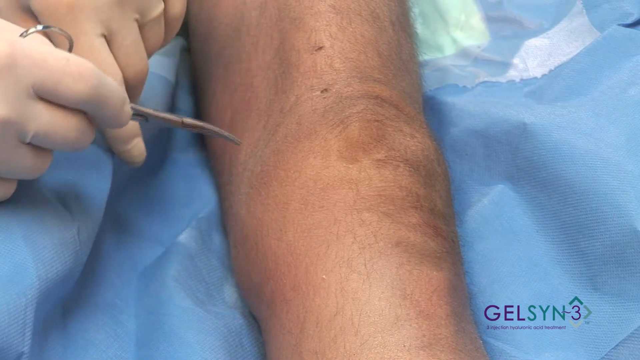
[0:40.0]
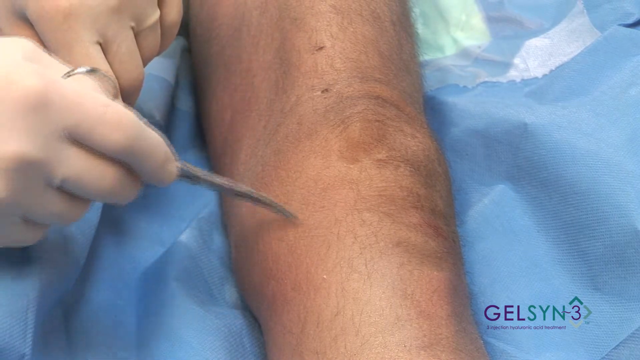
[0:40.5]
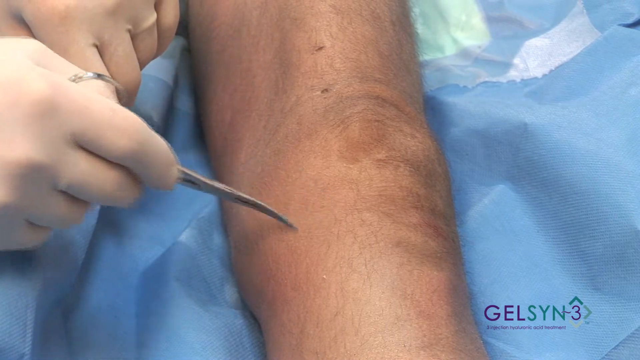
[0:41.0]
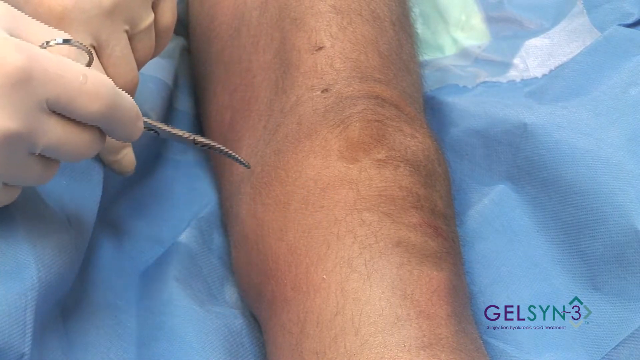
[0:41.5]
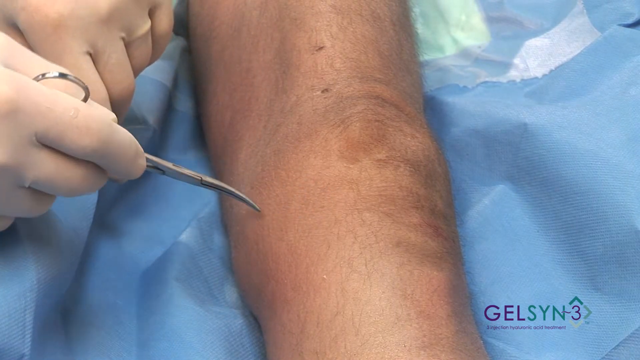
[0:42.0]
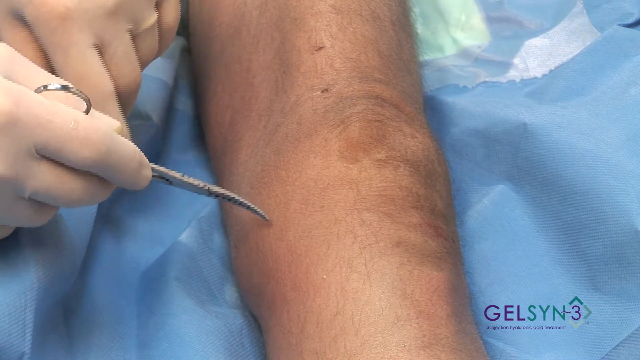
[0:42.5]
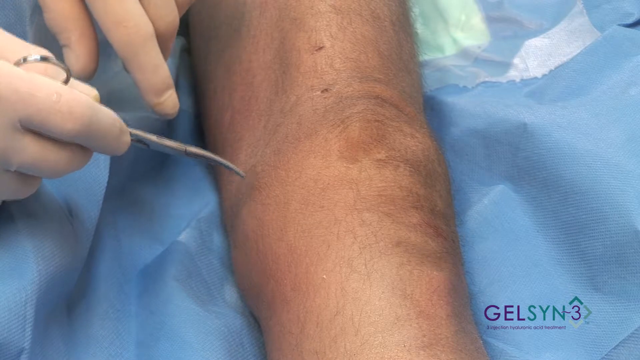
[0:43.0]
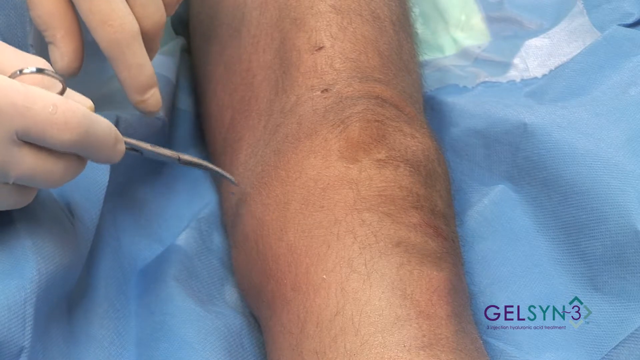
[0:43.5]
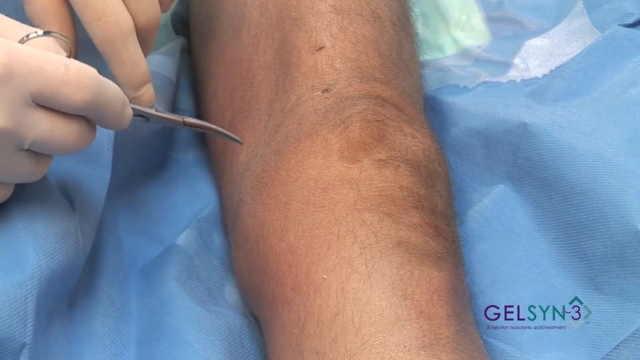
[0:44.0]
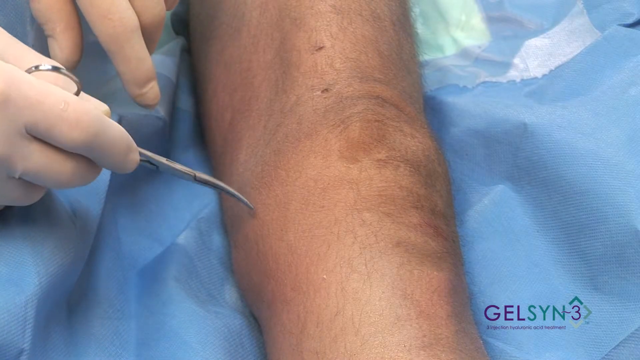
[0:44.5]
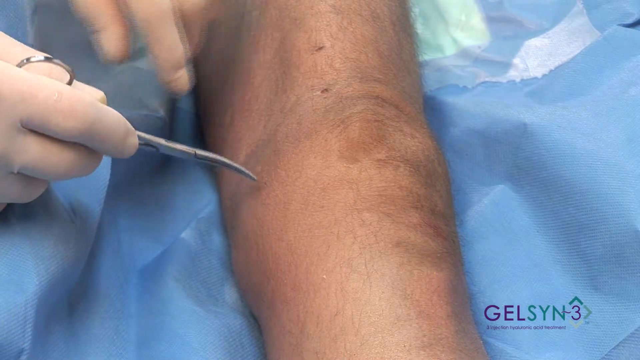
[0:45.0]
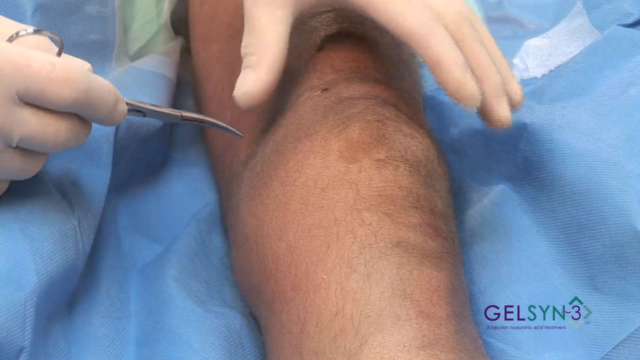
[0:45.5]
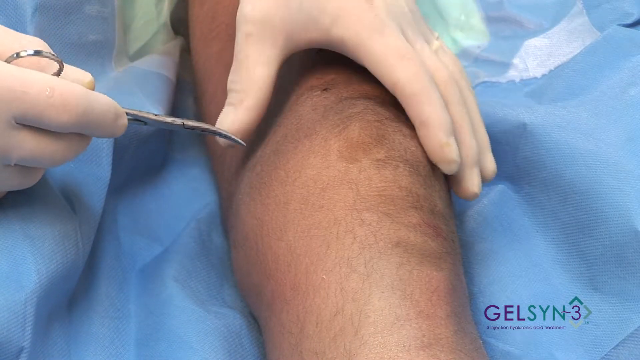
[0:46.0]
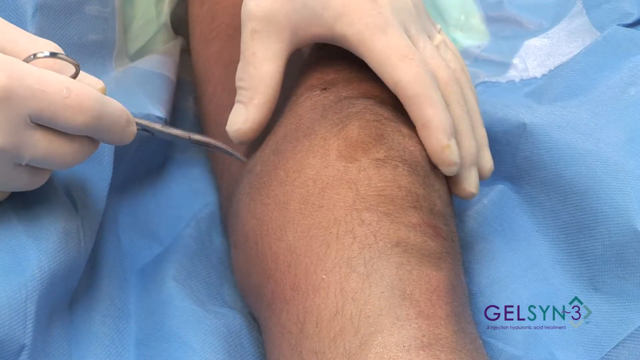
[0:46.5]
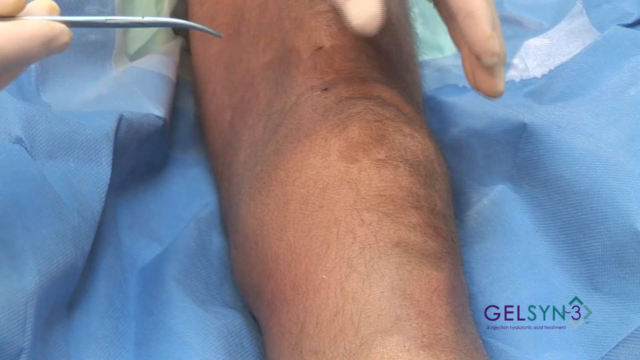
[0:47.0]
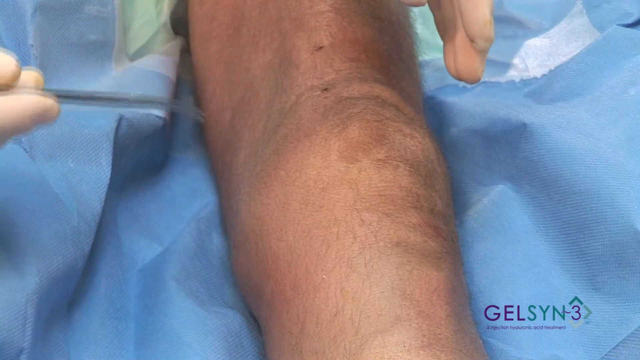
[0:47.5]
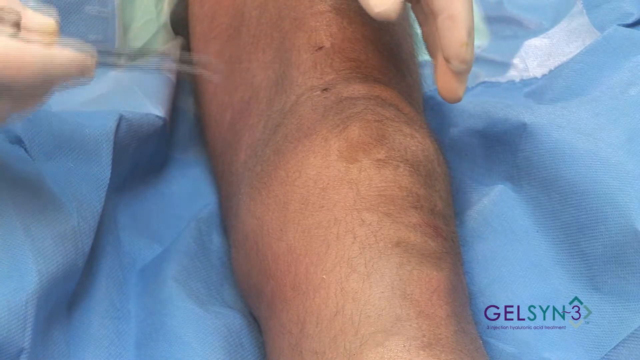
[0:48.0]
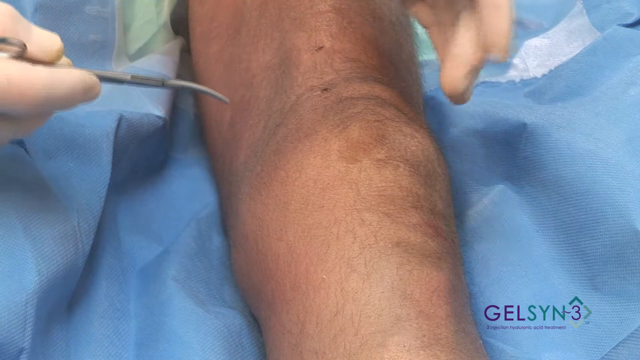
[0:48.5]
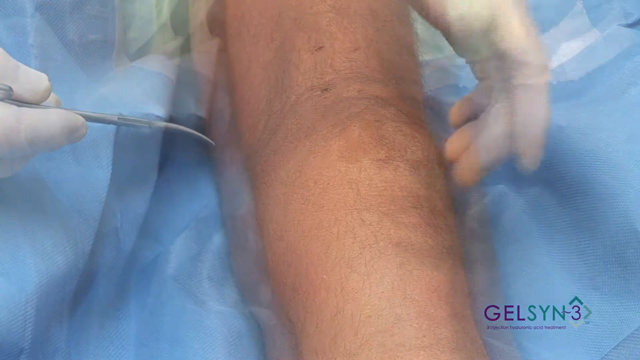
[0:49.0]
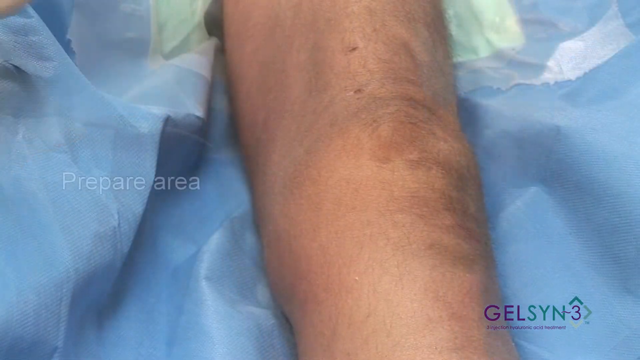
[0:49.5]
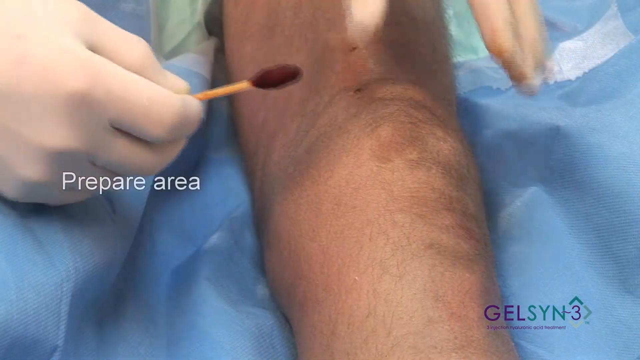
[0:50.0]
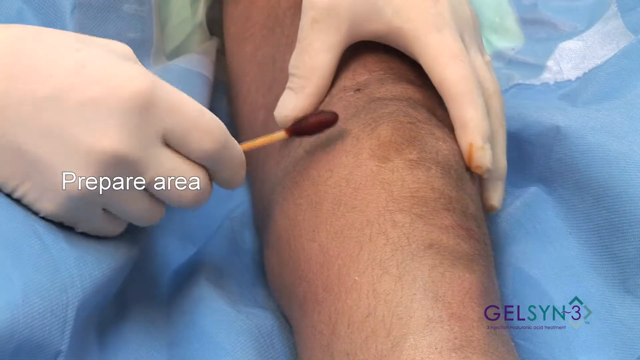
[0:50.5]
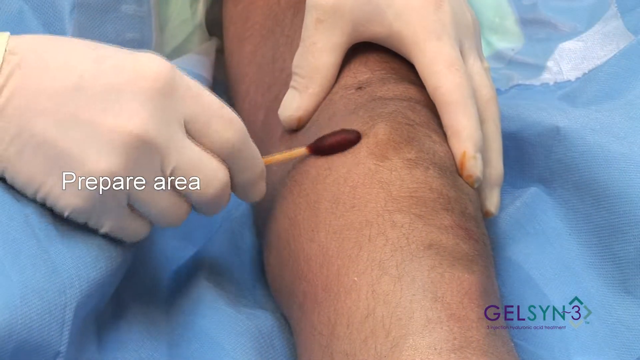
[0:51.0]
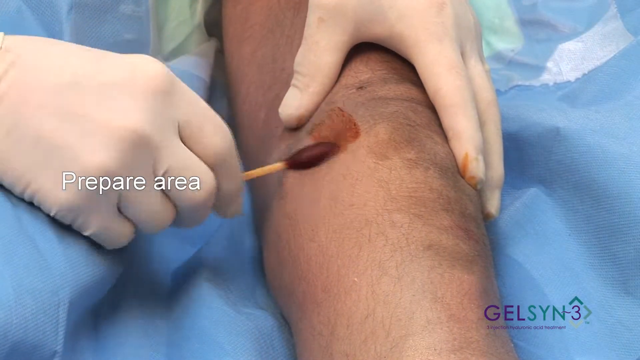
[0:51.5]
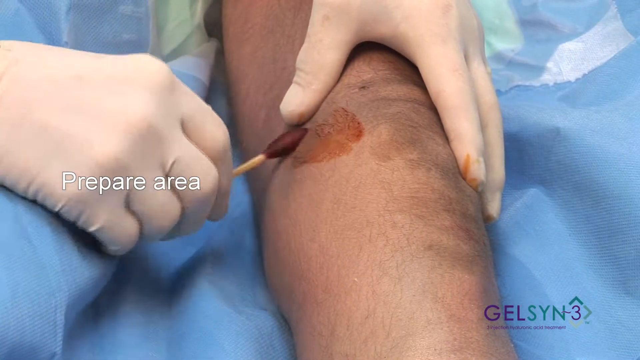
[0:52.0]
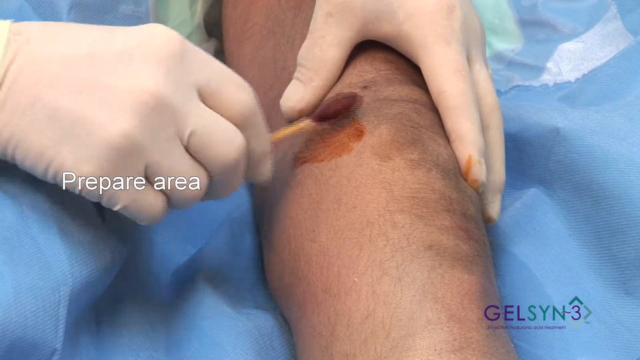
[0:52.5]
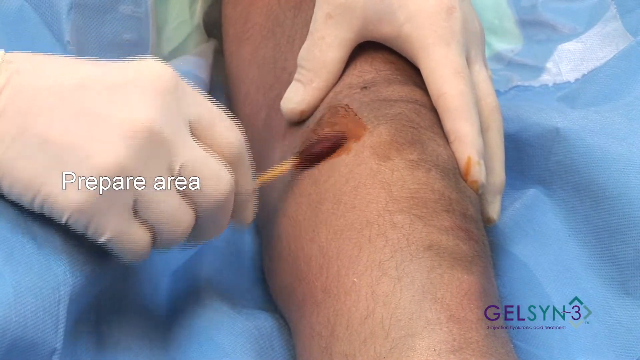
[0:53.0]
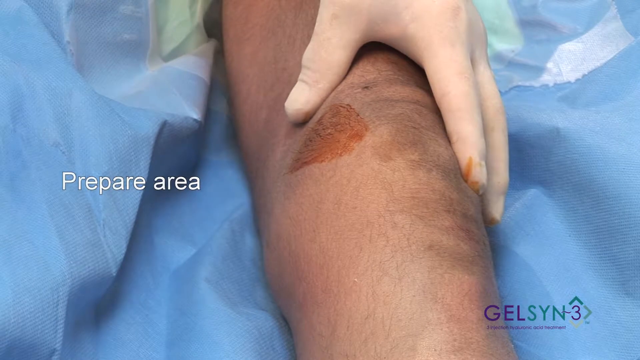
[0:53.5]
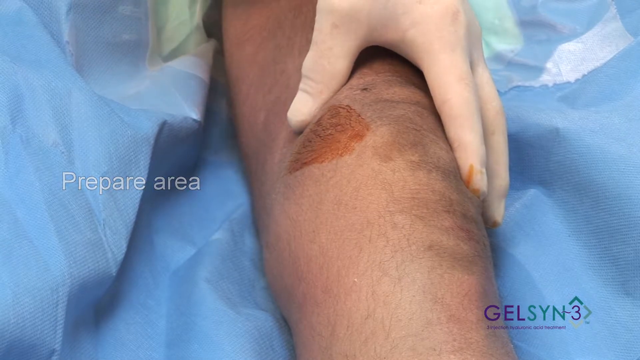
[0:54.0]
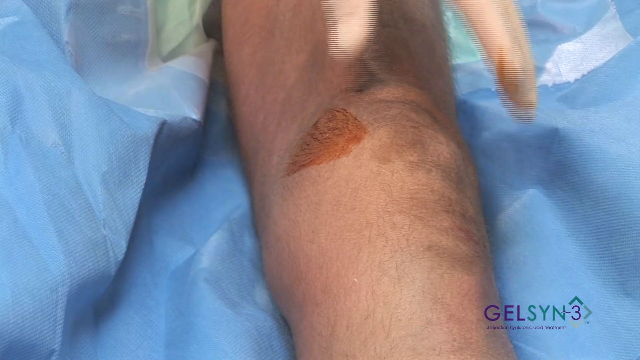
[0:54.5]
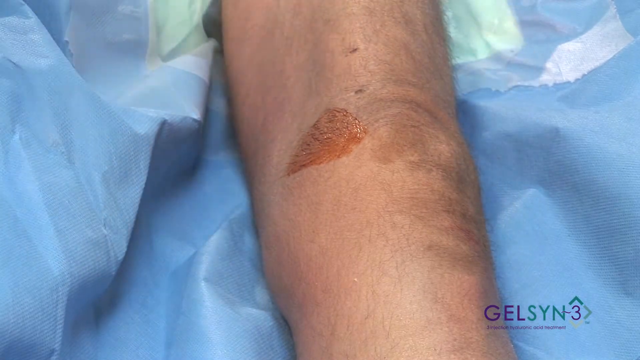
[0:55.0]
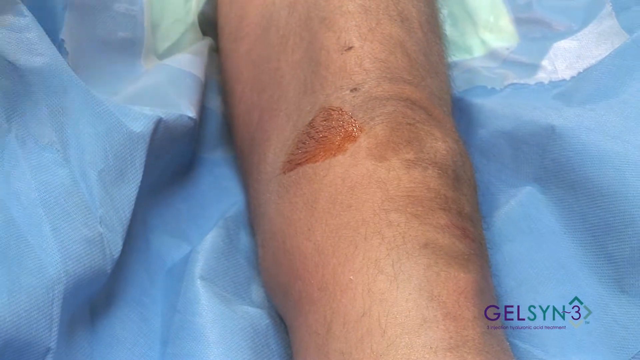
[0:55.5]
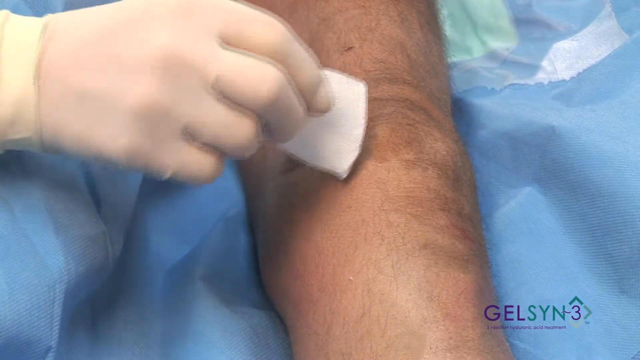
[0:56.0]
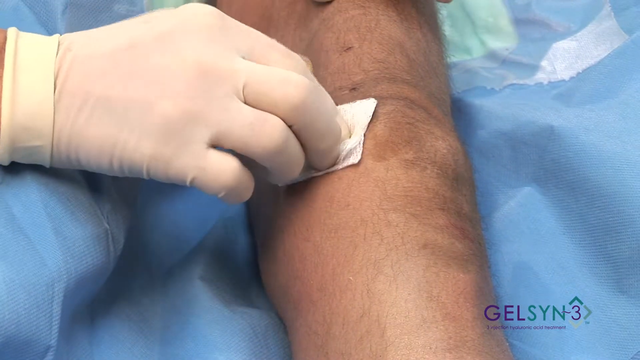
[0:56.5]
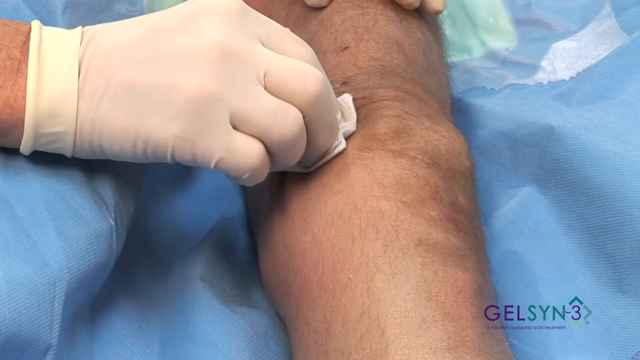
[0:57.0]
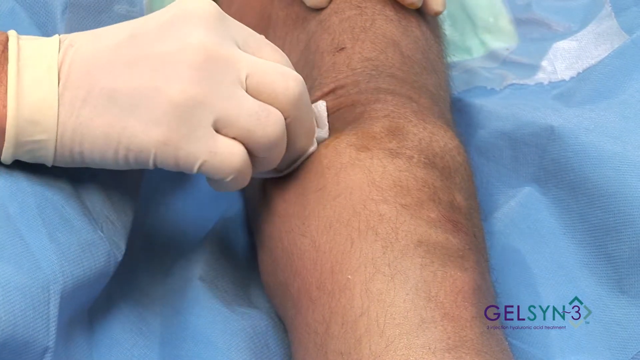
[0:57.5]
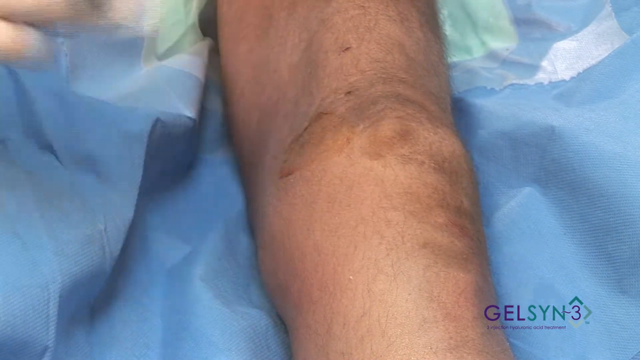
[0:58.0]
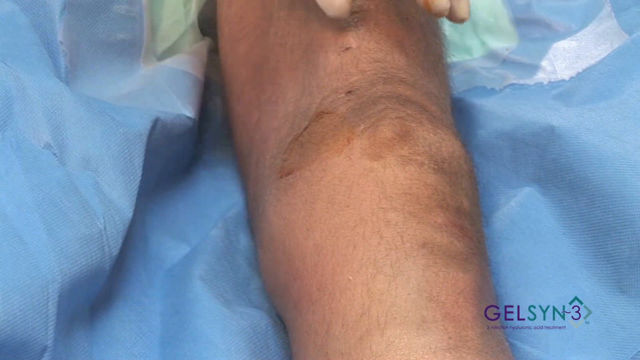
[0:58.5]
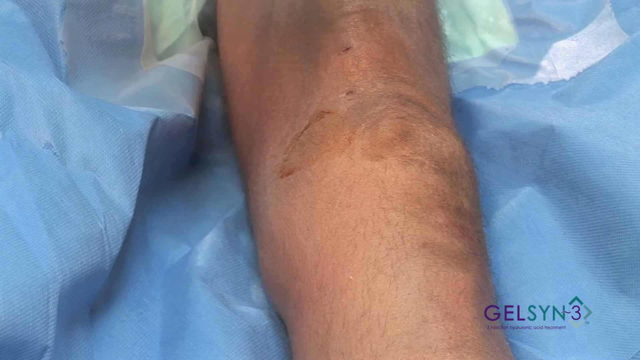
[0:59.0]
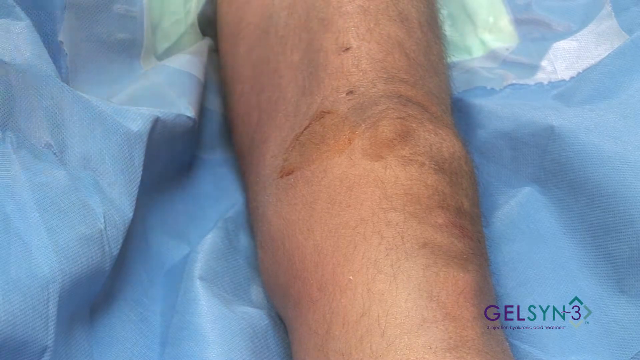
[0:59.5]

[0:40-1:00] The gloved hands continue gesturing to the left side of the knee, from the viewer's view, moving a little up and down. The left hand moves as if to grasp the top of the knee, briefly going almost out of frame, and then grasps the top of the knee. The right gloved hand holds a wooden cotton swab with a somewhat larger cotton head that is brown at the top, showing it has iodine on it. The iodine is applied in an almost irregular circular pattern on the left side of the knee, and white text on the left reads "prepare area," apparently indicating preparation. After the swab is removed with the right hand, a gauze pad is used to wipe off excess iodine. The knee rests on the blue medical paper.